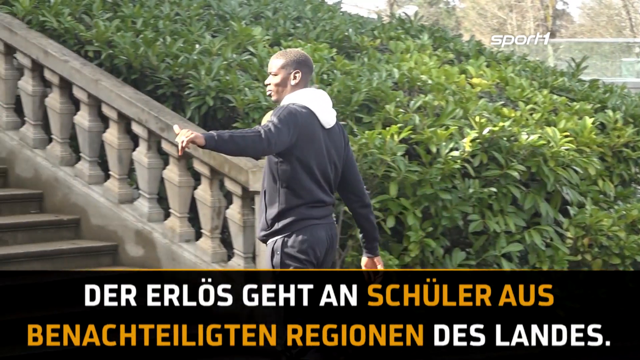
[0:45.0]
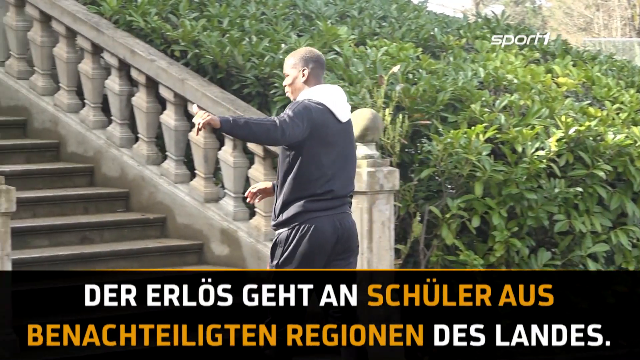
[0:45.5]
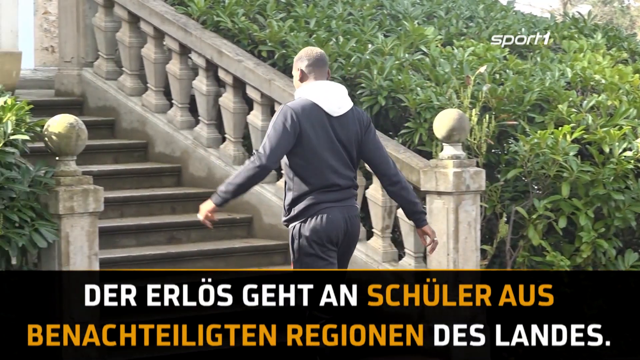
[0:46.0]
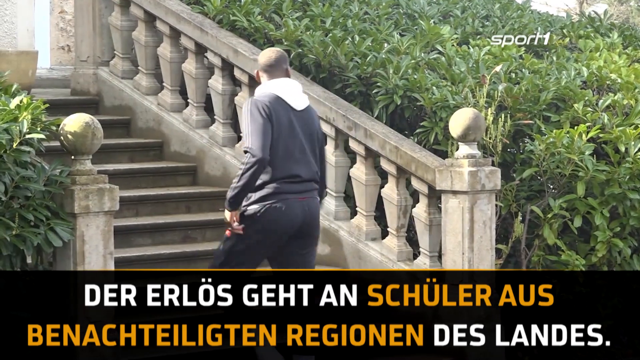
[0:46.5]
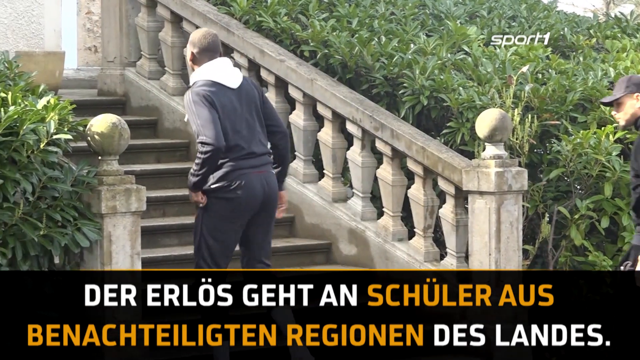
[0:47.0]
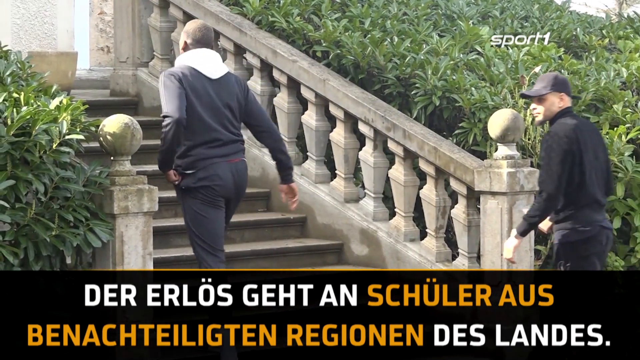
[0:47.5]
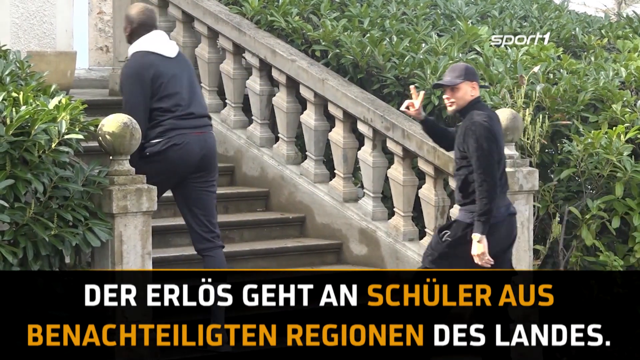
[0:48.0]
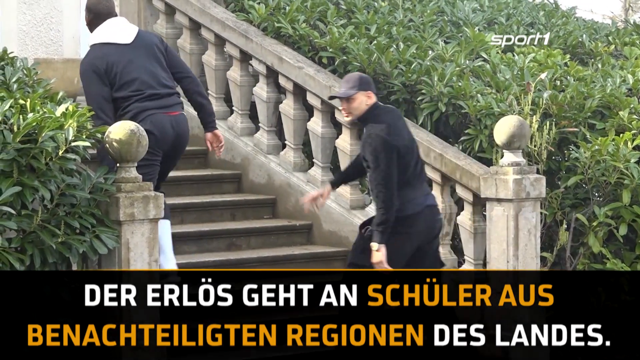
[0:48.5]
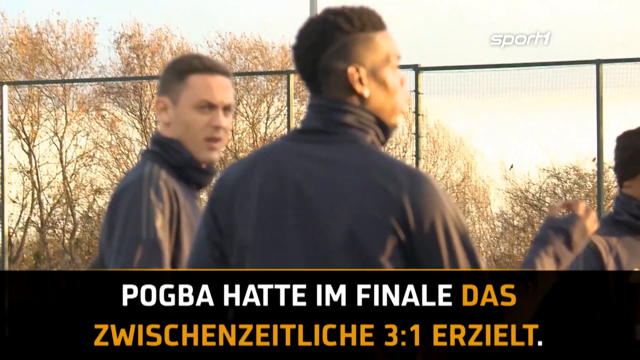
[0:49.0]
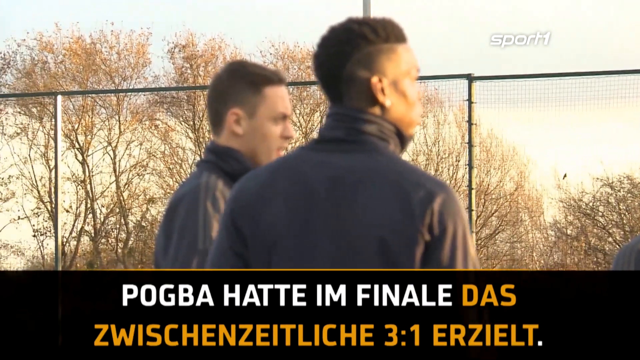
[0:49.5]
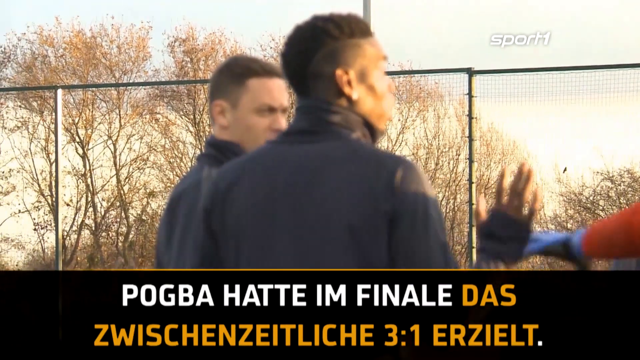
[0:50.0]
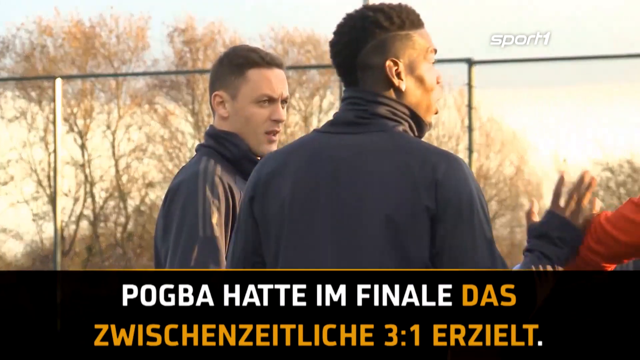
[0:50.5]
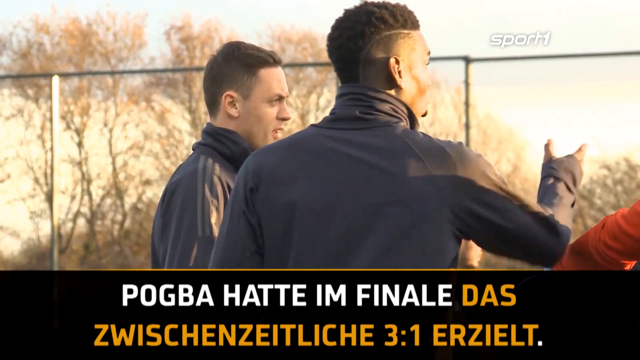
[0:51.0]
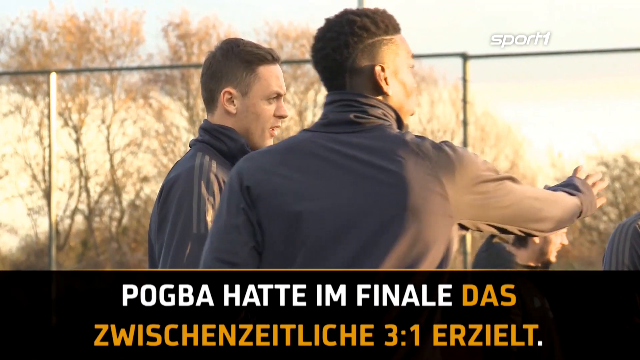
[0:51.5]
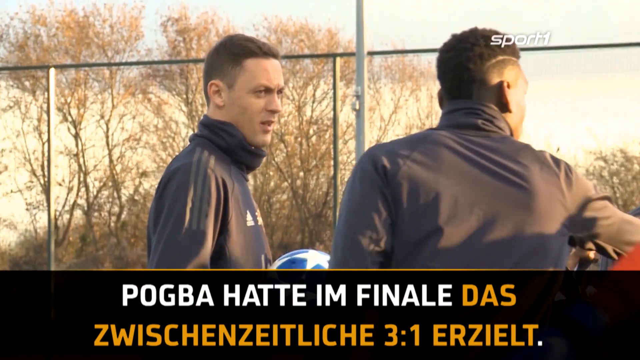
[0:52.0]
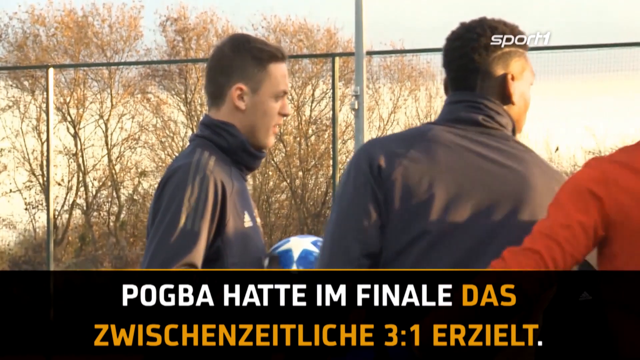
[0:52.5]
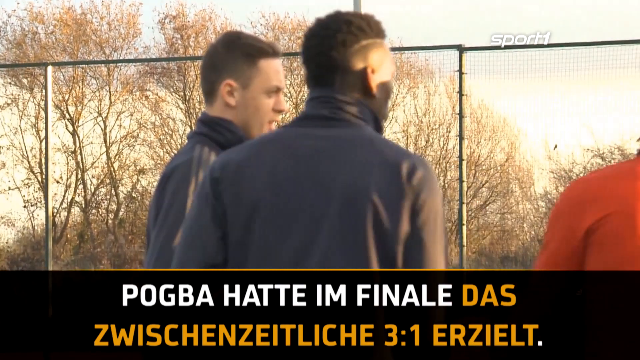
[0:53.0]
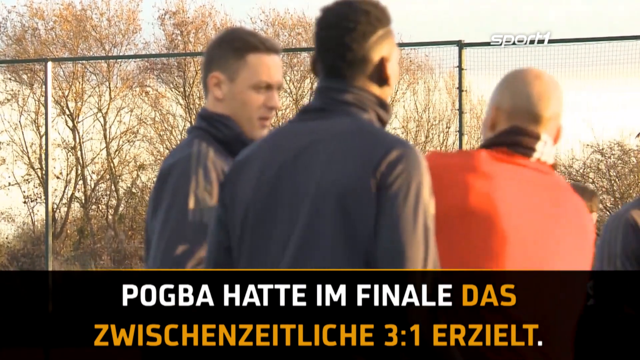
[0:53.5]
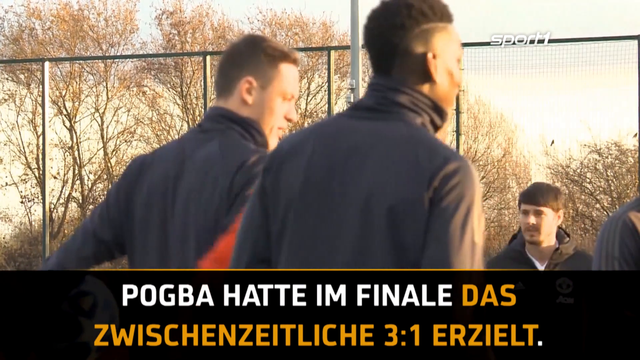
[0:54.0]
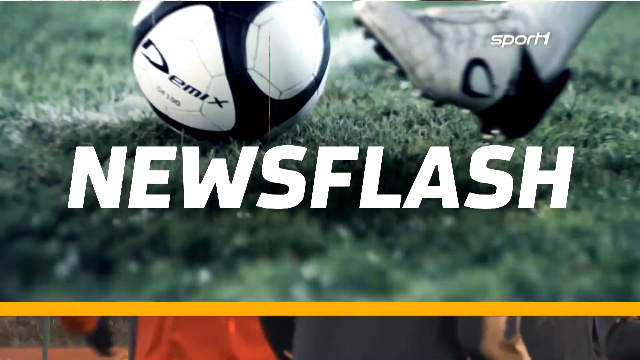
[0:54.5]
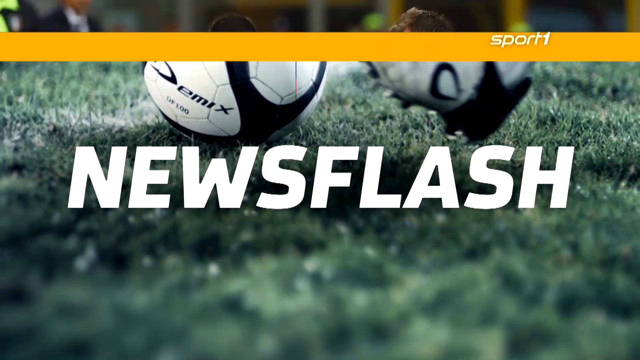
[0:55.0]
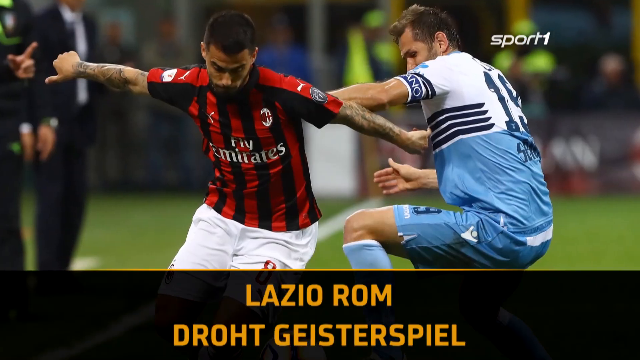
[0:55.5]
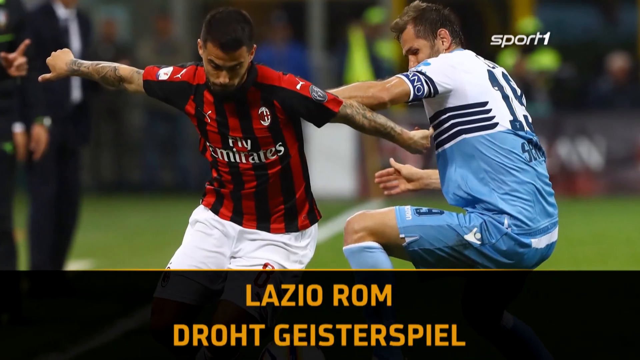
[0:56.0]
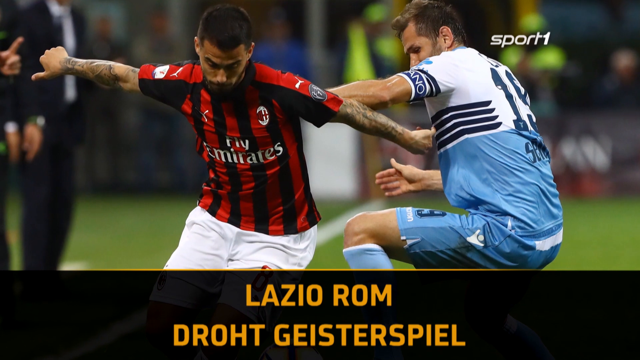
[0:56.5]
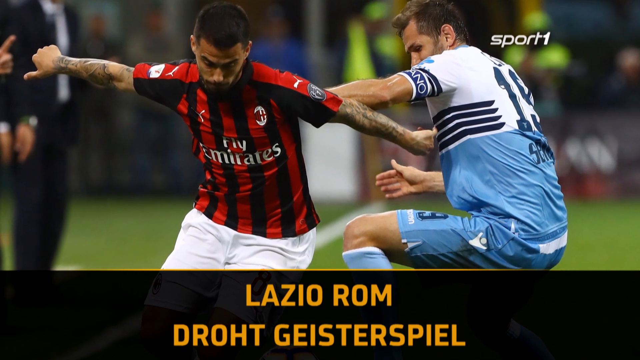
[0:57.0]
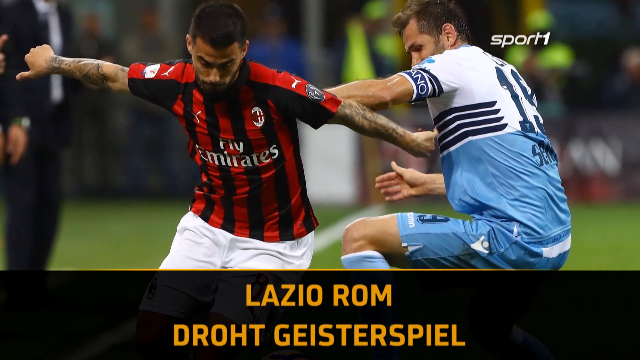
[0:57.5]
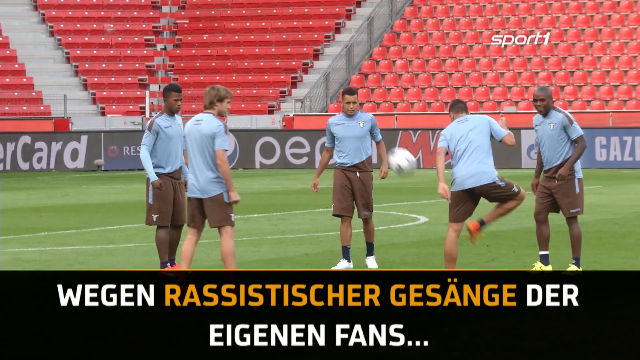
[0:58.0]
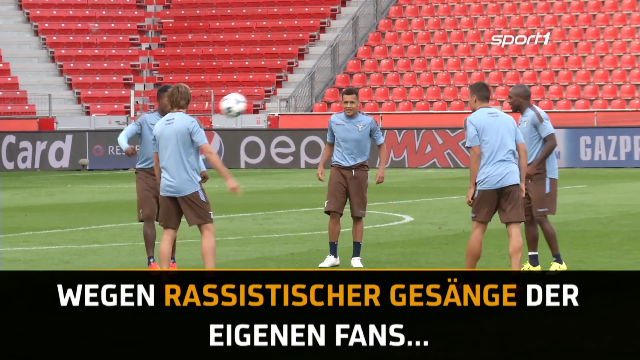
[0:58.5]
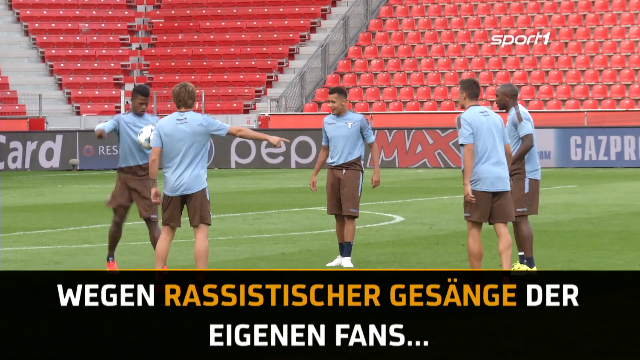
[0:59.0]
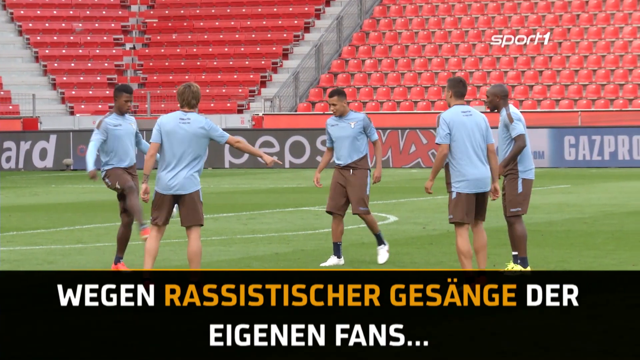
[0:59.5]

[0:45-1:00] The player in sweatpants and a hoodie begins walking up a set of stairs that look like they are made of stone or concrete. Another player begins walking up behind him, also in a black top, black sweatpants, and a black baseball cap. Then another still image shows other soccer players, one in a black and red striped jersey and one in a blue jersey, battling for a soccer ball. The video zooms in on the still image and then switches to more footage of the player from the picture. The player appears to be standing in a circle with about six other players, all in light blue shirts and brown shorts, kicking the ball around the circle.